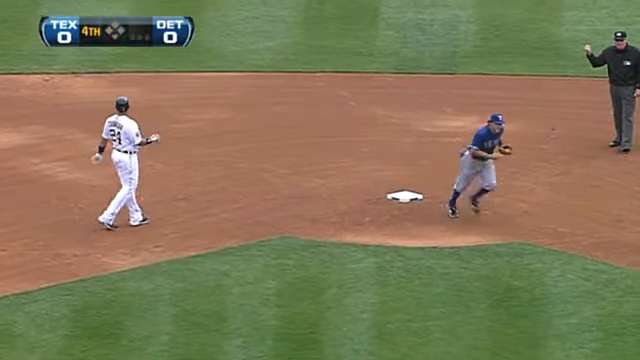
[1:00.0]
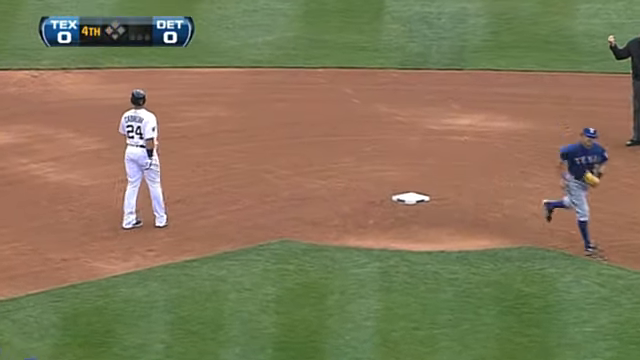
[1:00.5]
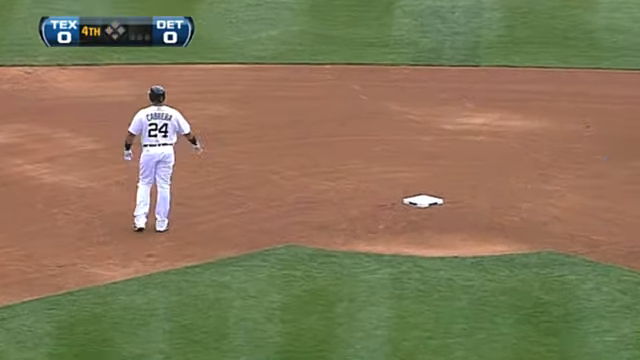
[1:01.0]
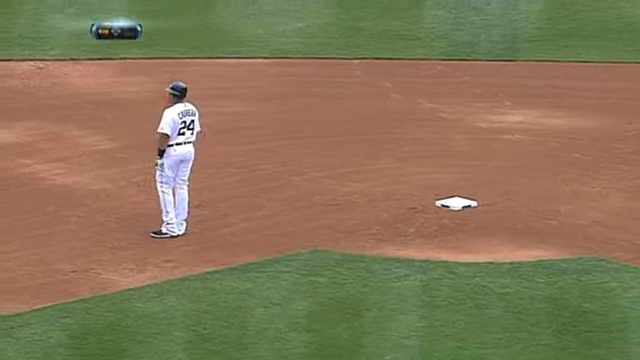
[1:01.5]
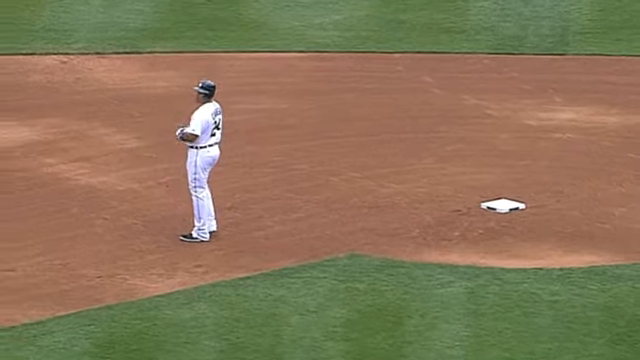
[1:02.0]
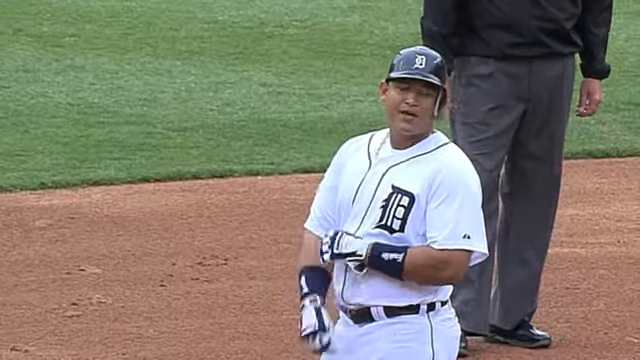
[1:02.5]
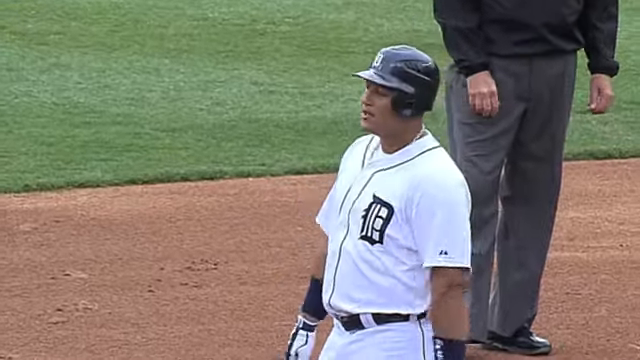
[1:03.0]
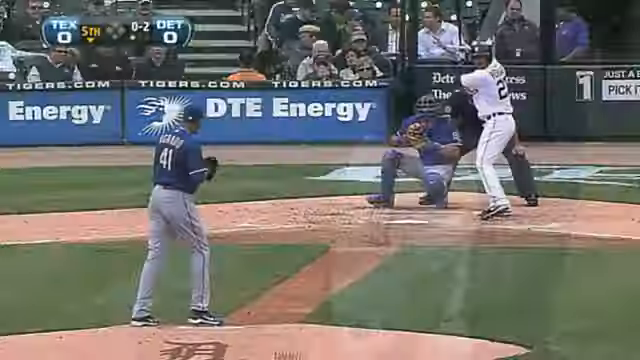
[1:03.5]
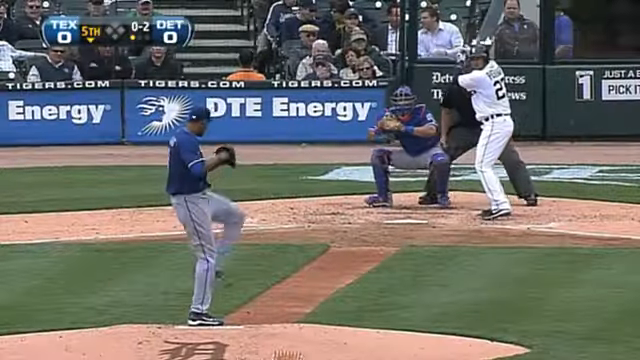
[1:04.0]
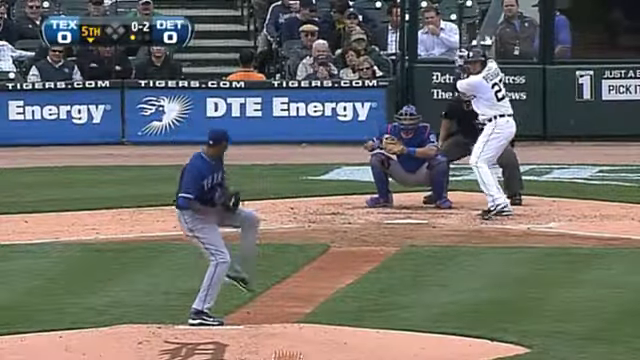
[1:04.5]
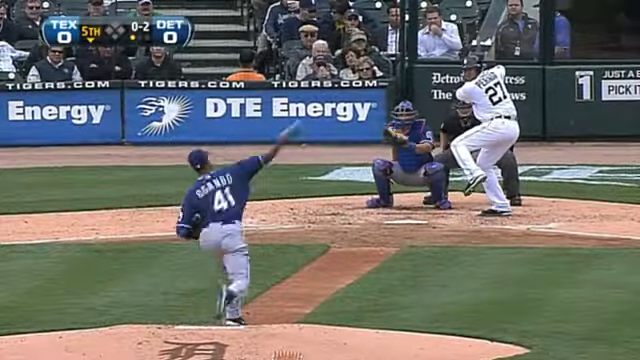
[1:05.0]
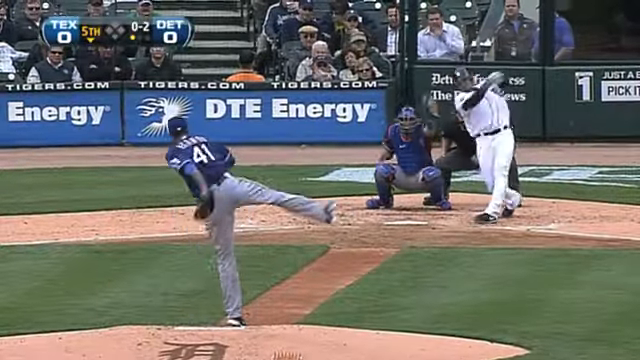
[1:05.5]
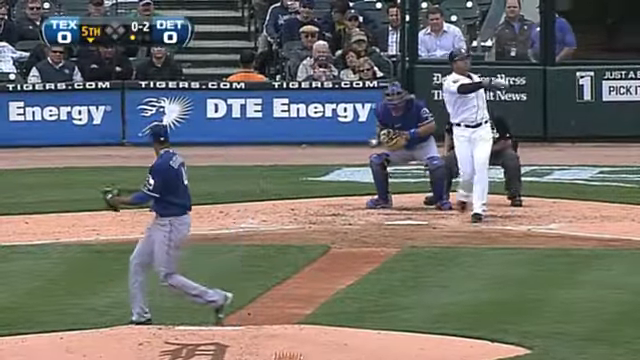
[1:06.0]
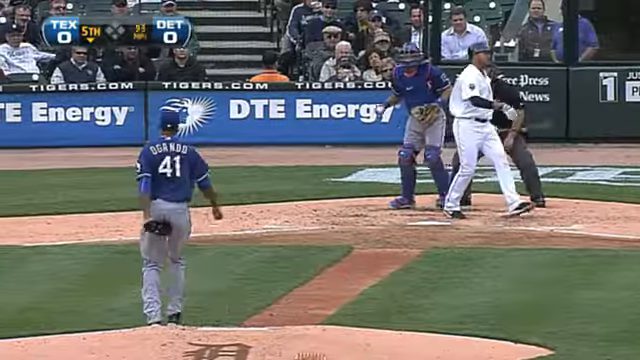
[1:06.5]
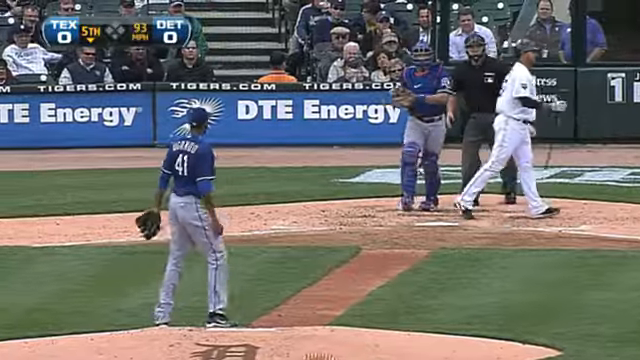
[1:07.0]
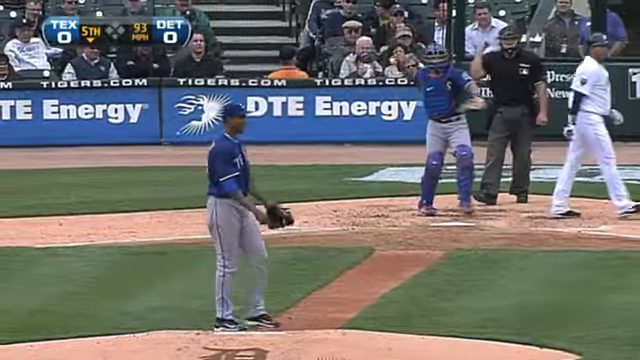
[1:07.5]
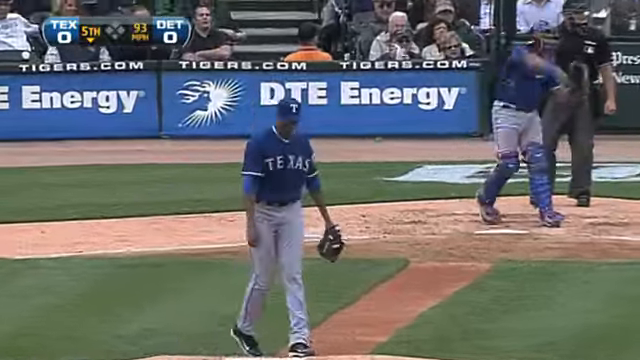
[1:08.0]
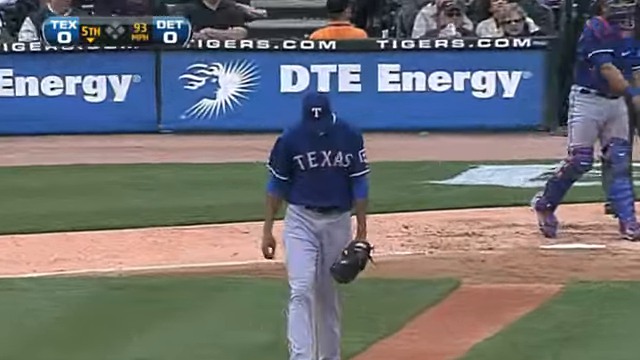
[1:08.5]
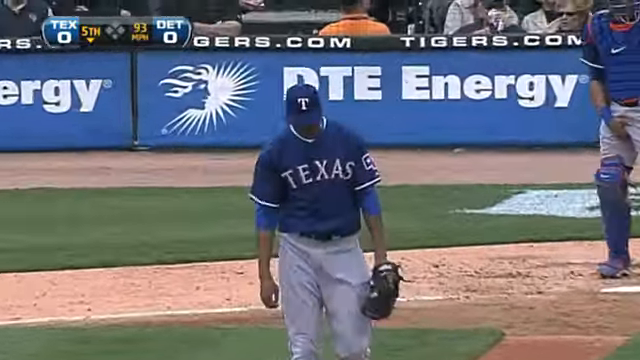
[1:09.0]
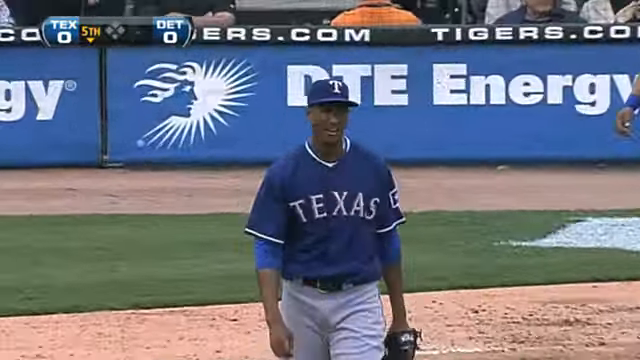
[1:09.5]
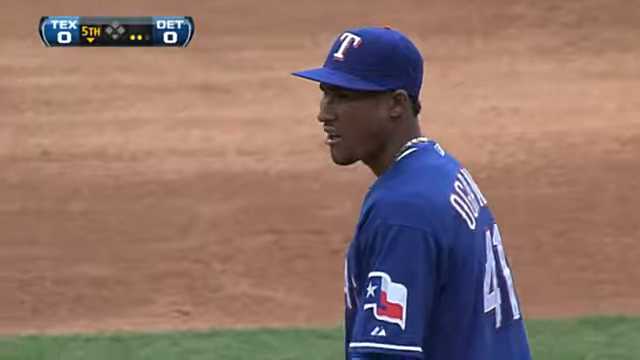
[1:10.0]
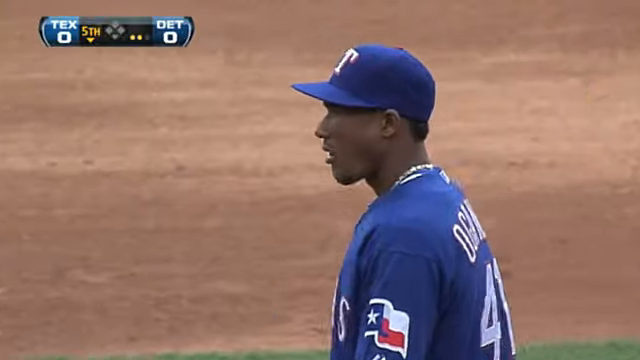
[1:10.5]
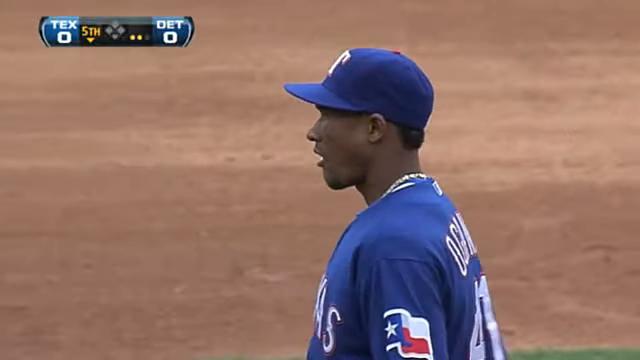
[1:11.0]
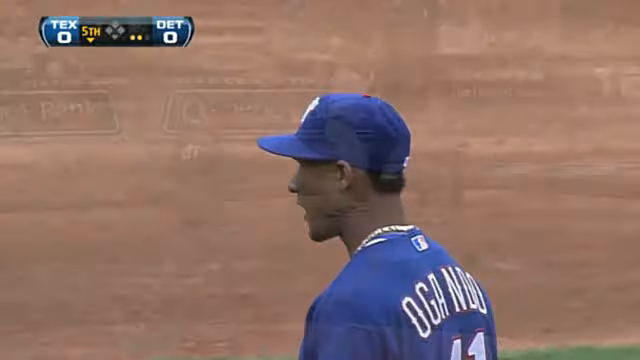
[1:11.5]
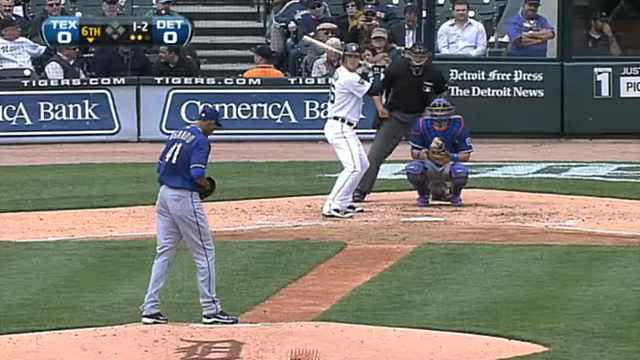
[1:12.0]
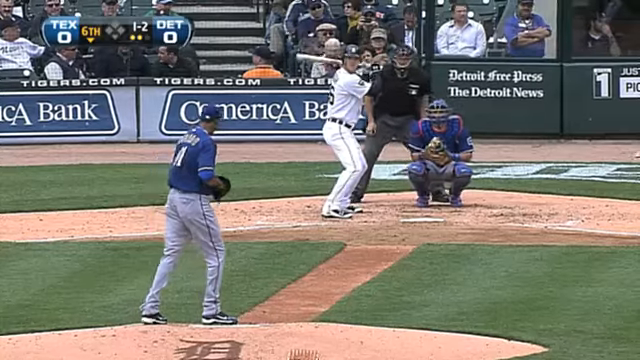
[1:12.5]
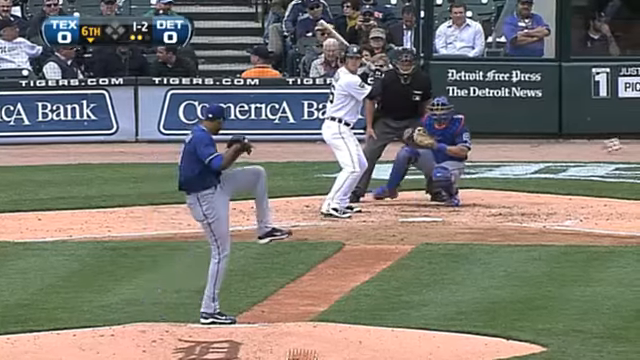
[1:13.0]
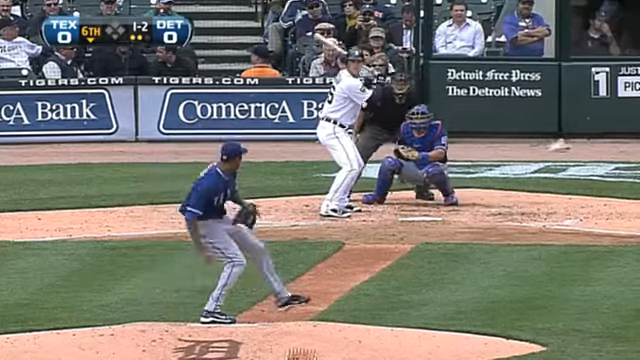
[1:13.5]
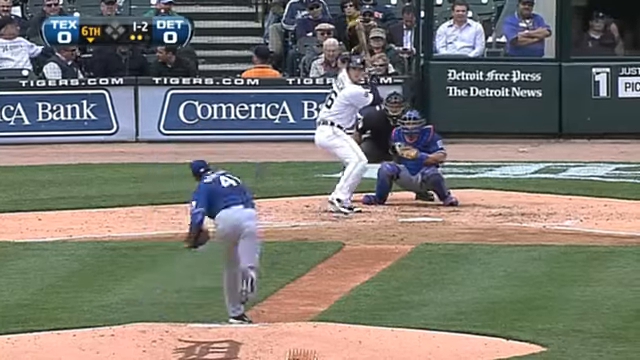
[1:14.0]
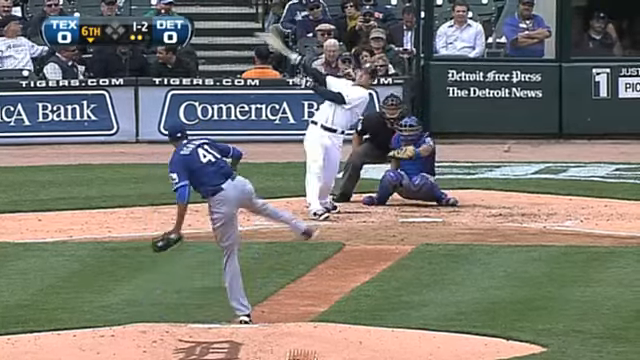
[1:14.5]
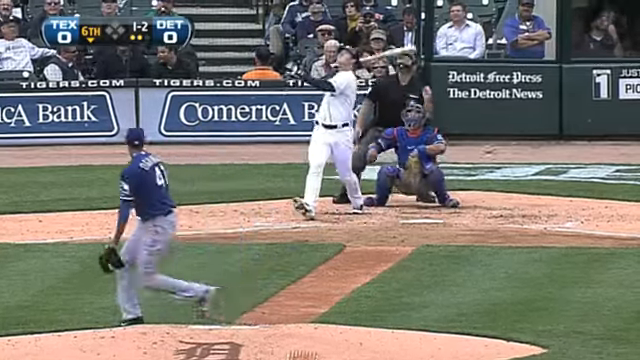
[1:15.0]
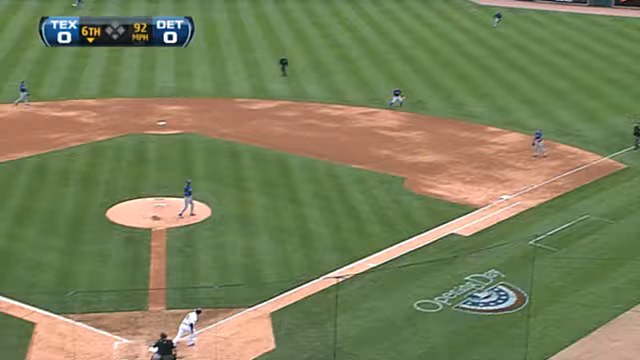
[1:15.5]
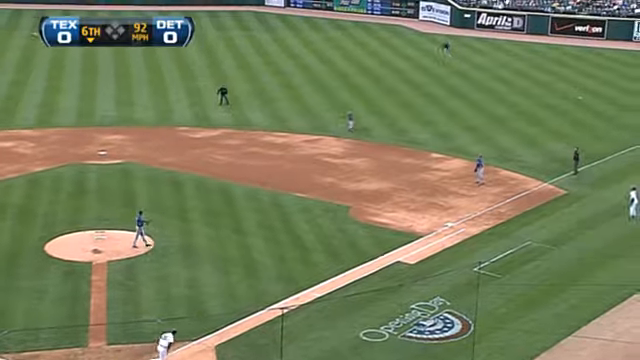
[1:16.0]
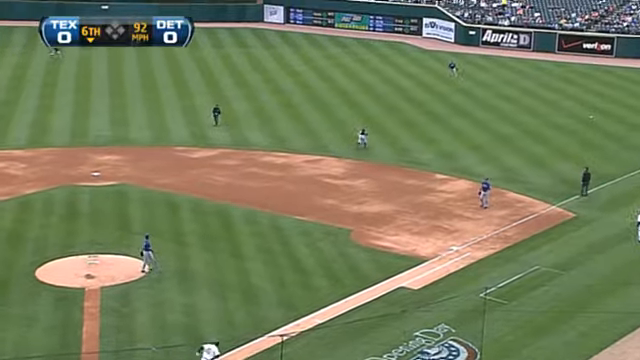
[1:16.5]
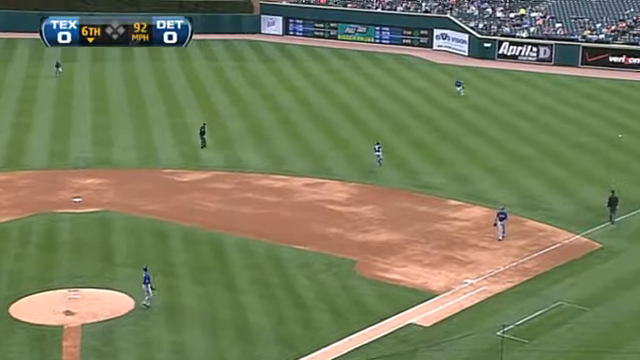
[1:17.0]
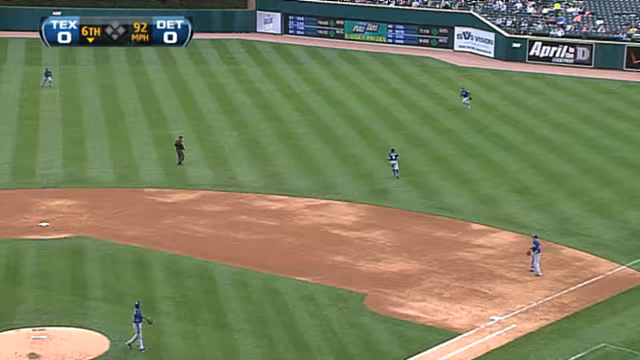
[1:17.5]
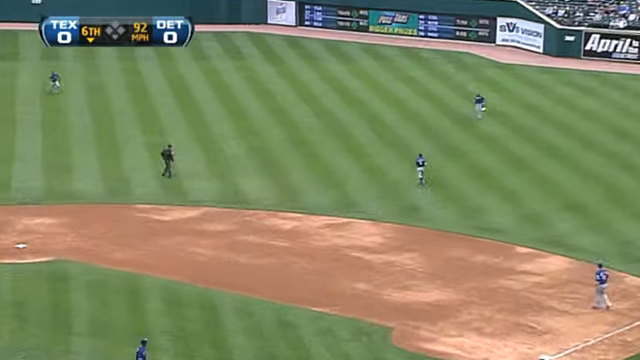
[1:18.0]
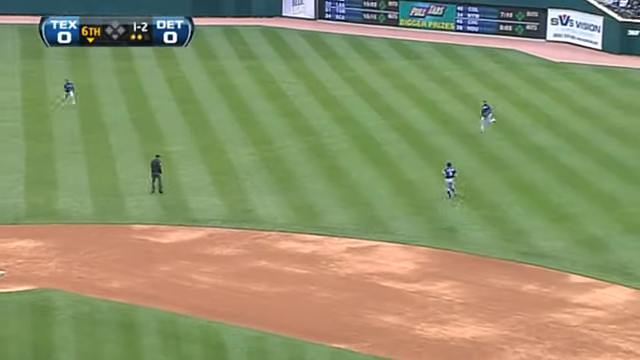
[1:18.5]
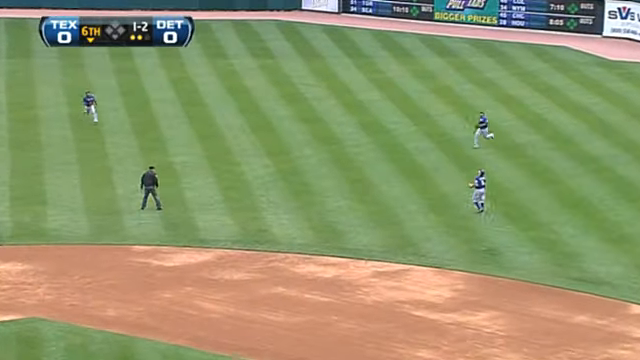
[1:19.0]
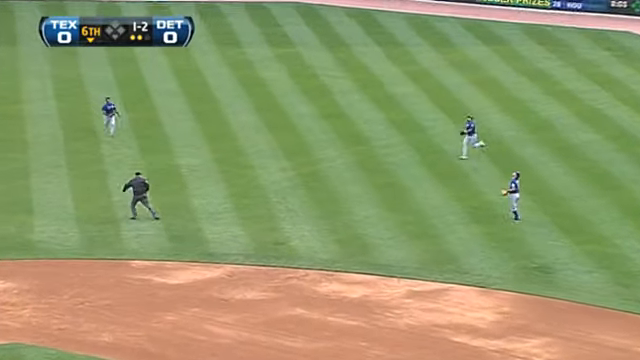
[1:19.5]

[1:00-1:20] The play continues with the Detroit runner on second, who saw the ball hit behind shortstop, assumed it was a hit and ran straight for third base. The shortstop caught the ball and fired to second to get the runner long before he could return to his base. In the bottom of the fifth, with no balls, two strikes and one out, Ogando is on the mound and the right-hander delivers. The Detroit Tigers batter swings and misses for another strikeout. On the next pitch, the Detroit batter hits the ball high into short right field; the right fielder runs to catch it, and it is unclear whether he makes the catch, though he probably does. Ogando then strikes out another batter. He pitches to another batter, who hits the ball high, and the fly ball to shallow right is shown with the right fielder running in.